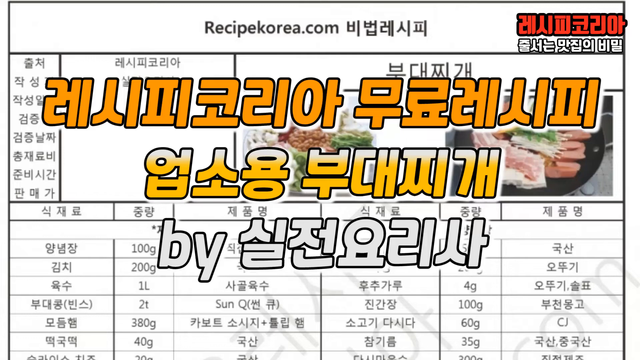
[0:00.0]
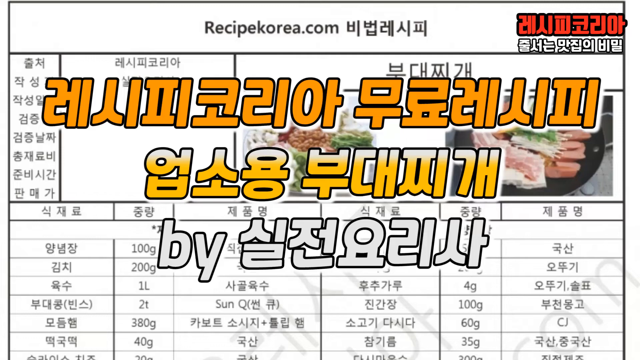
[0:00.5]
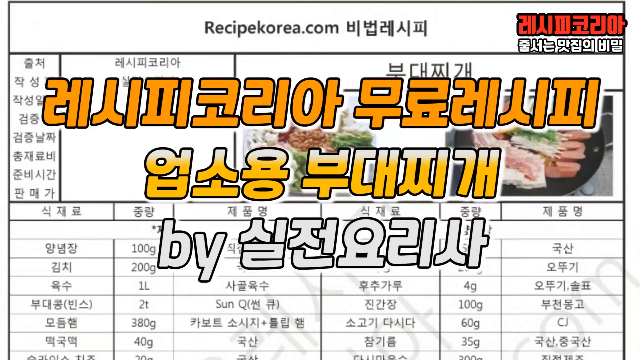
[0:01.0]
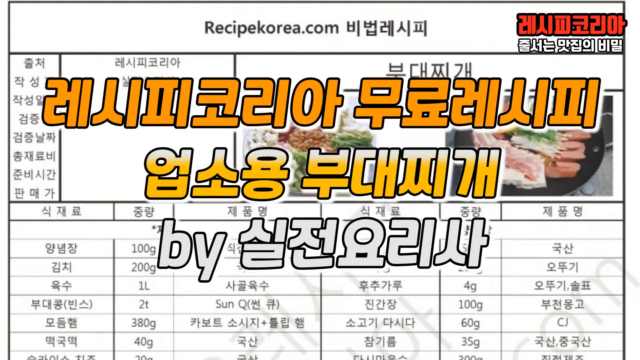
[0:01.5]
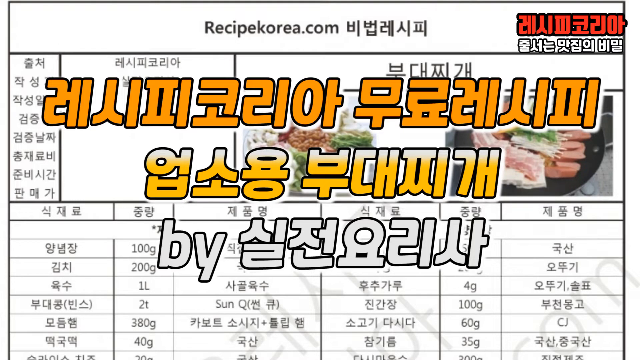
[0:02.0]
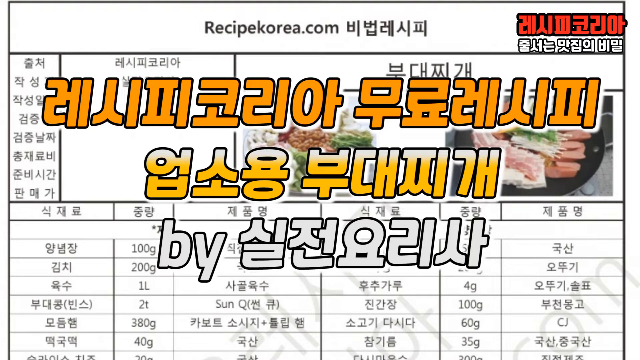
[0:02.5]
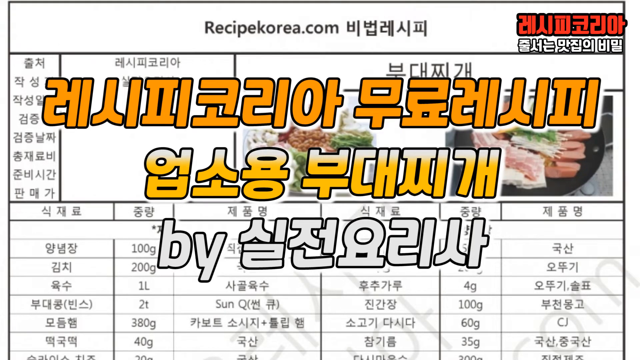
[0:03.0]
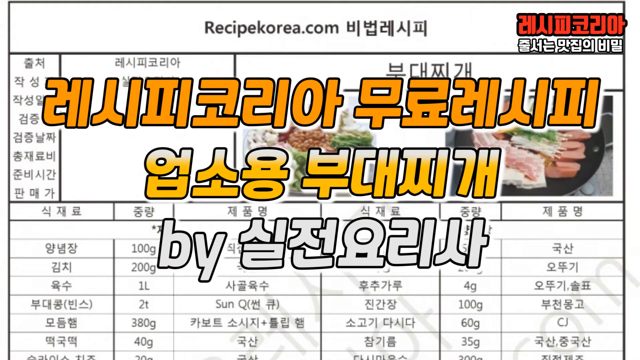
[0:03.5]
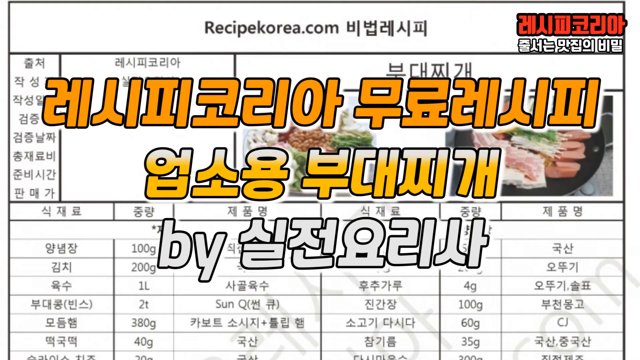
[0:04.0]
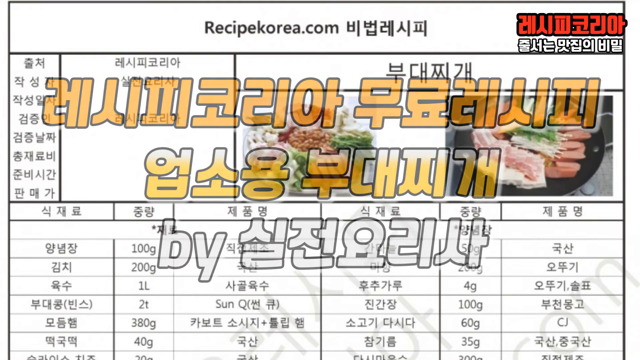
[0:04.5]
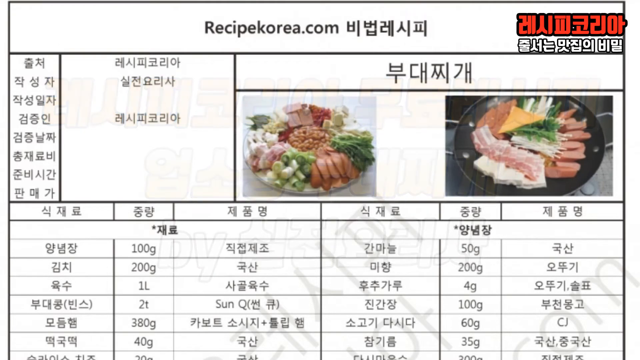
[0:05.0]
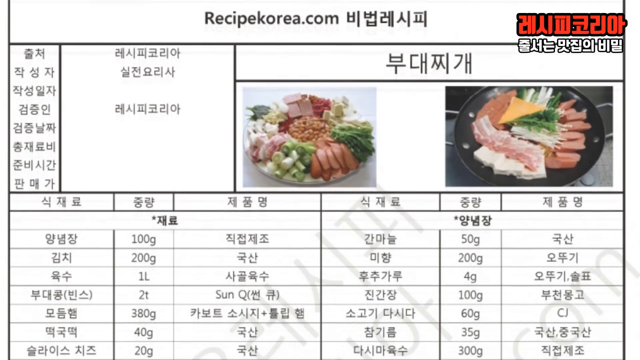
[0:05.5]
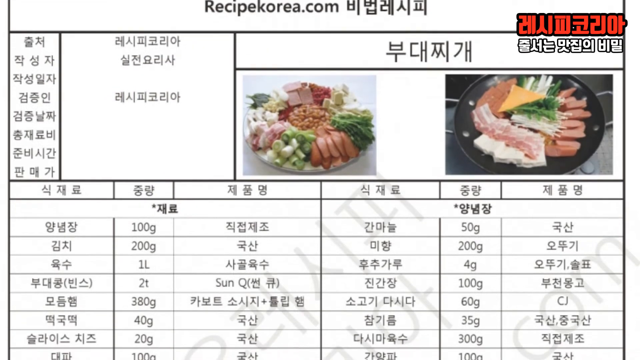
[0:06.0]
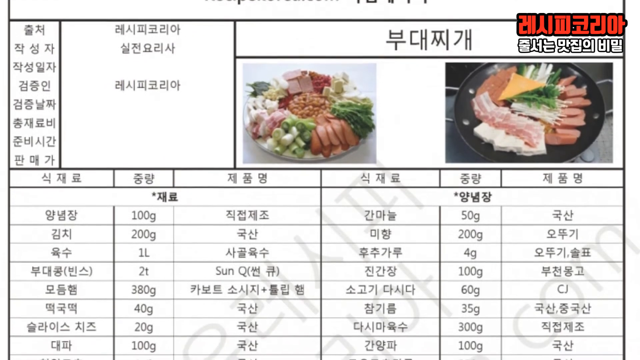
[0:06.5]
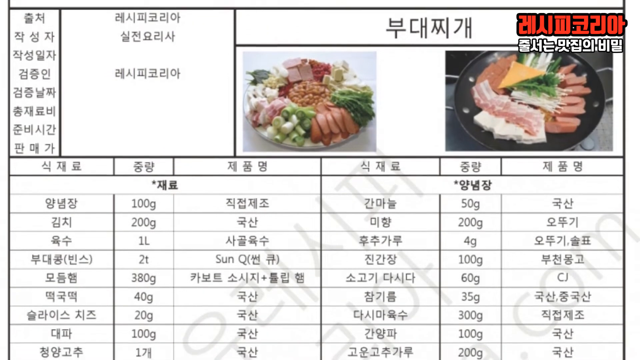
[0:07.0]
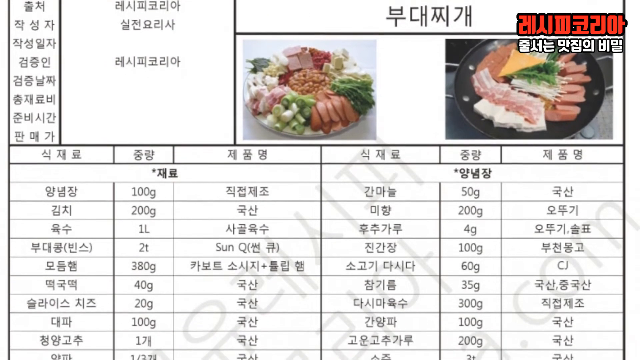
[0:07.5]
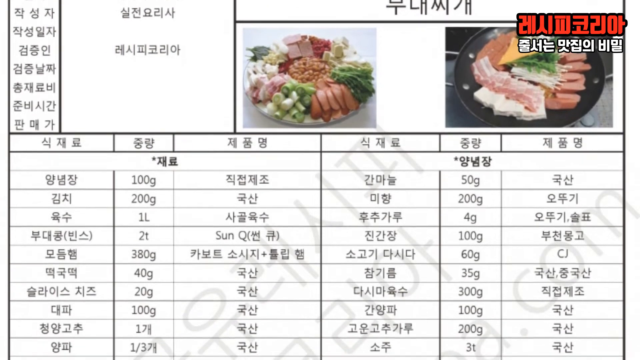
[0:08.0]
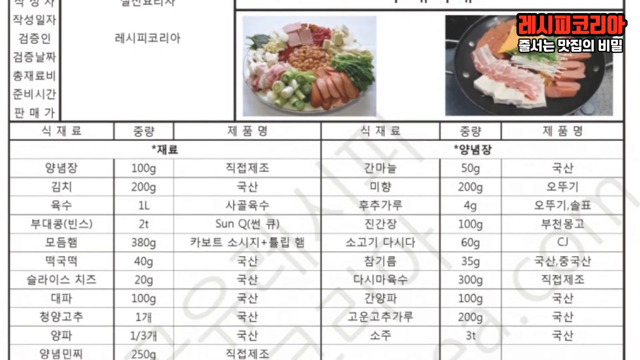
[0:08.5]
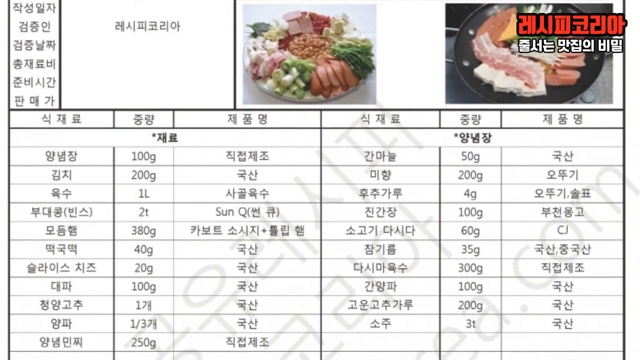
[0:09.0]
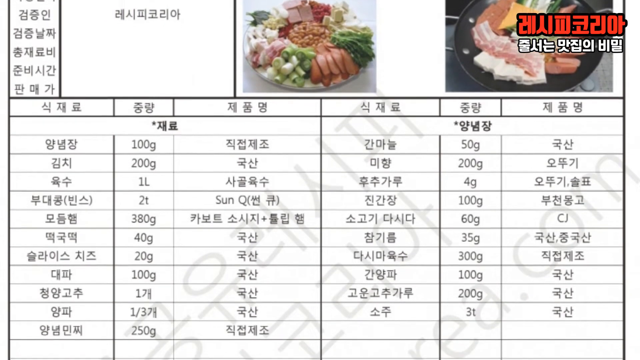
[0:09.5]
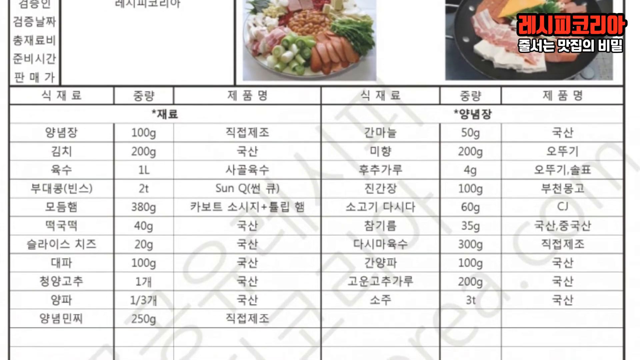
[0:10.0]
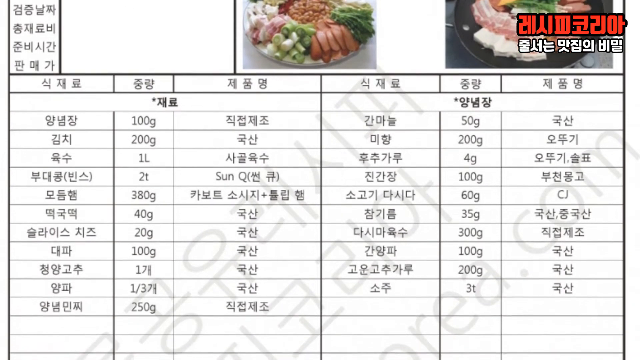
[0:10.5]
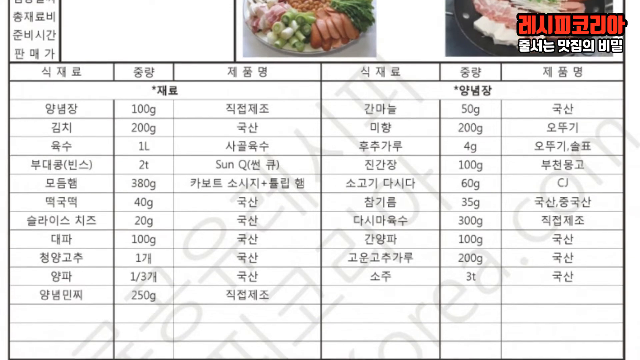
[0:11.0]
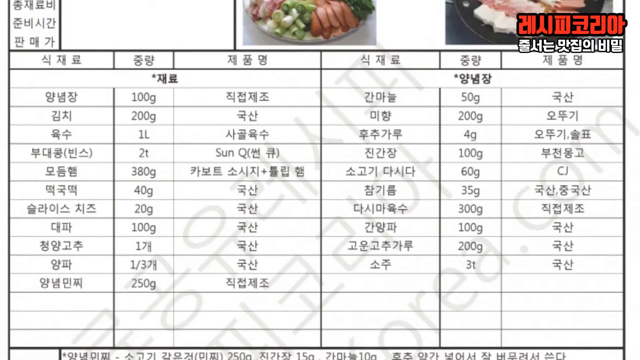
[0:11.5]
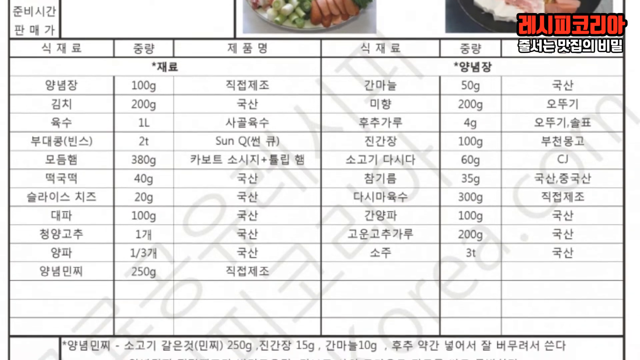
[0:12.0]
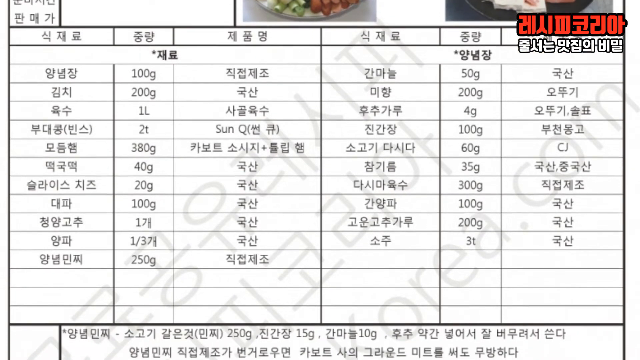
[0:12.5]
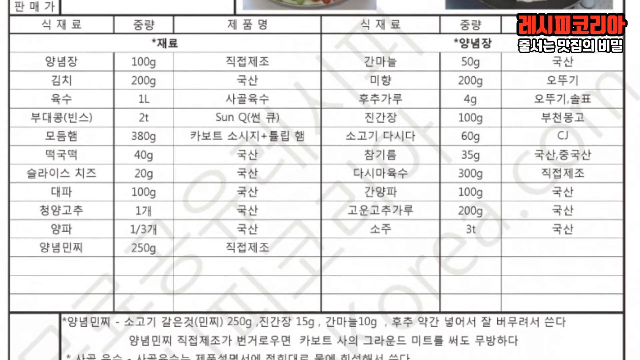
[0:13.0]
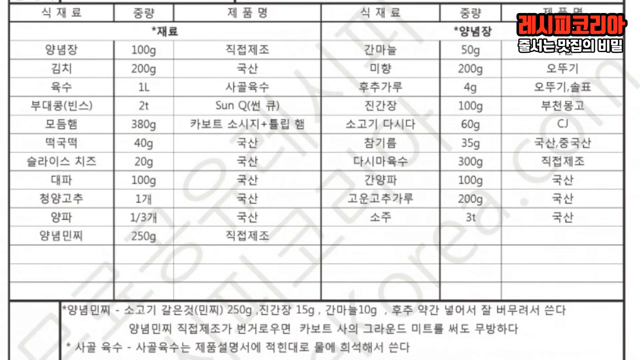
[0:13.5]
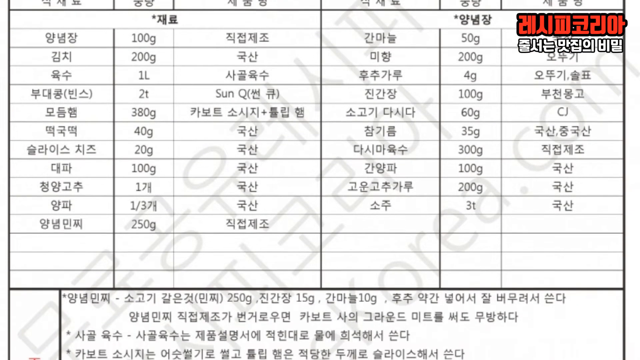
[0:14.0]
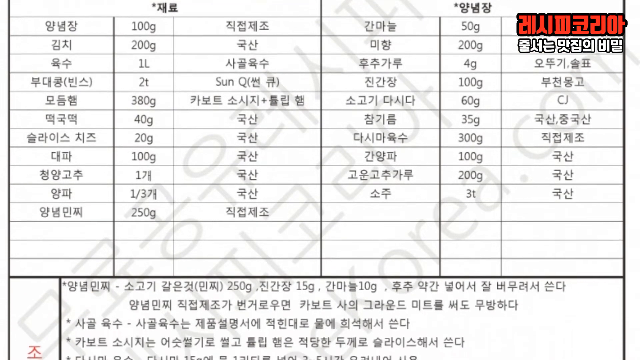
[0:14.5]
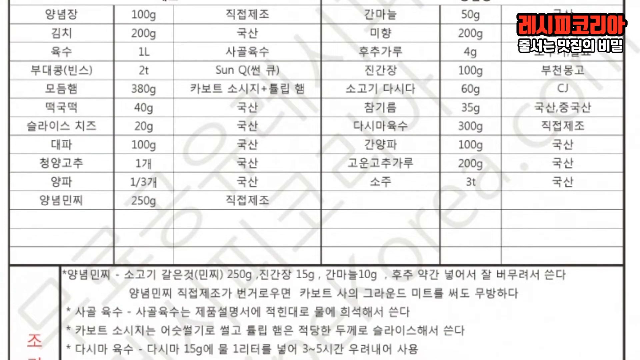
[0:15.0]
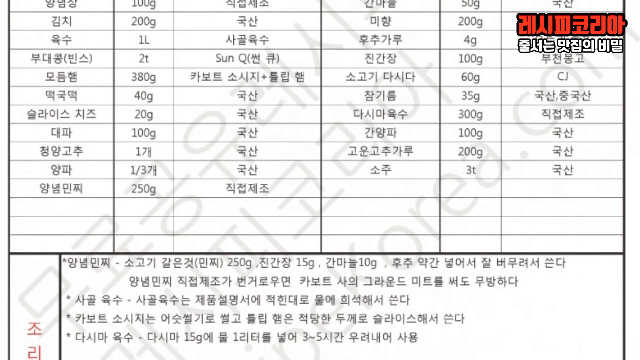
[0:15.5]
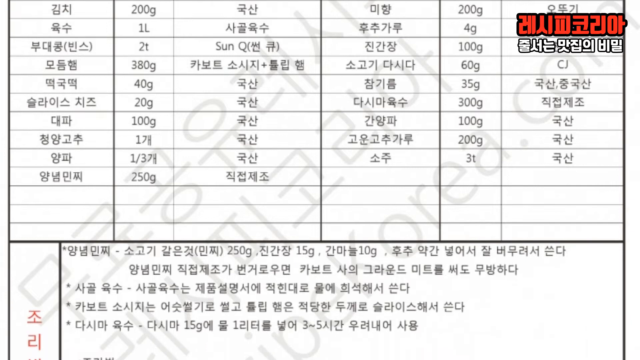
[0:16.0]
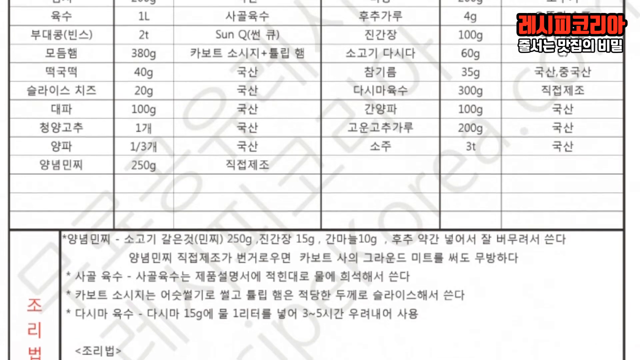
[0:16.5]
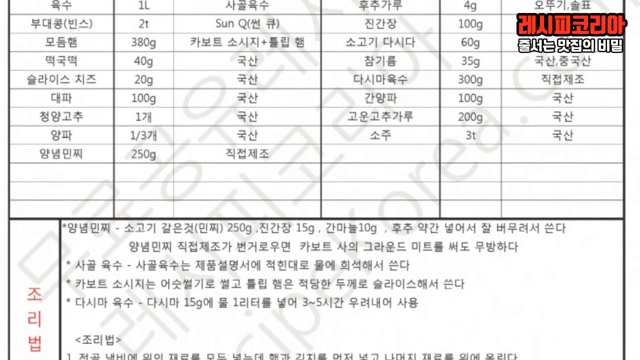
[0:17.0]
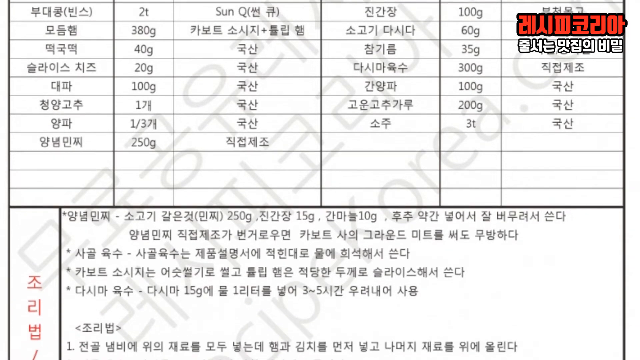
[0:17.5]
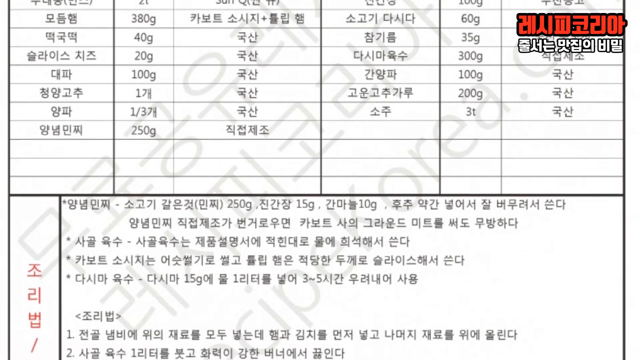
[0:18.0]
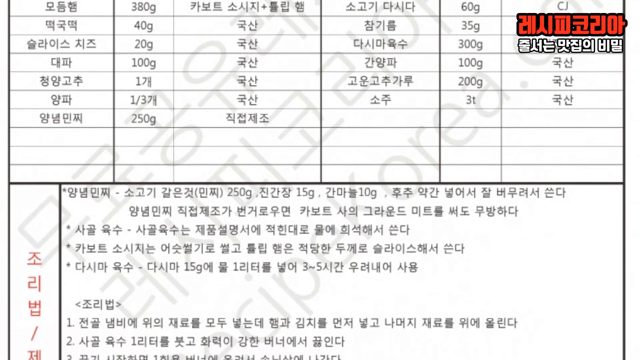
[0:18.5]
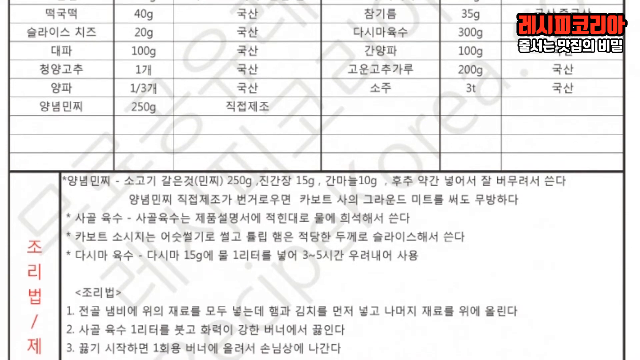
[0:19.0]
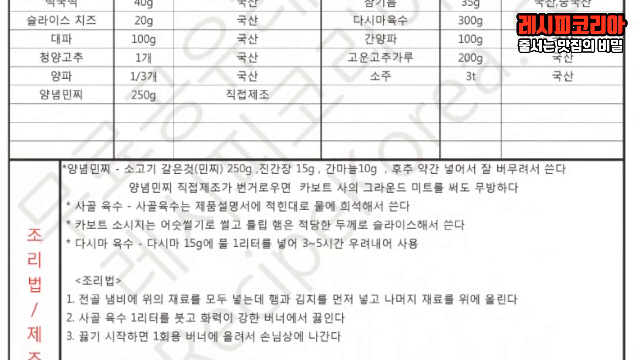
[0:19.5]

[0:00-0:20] The video's text is in Korean; at the top it reads "recipekorea.com," apparently the website the video comes from. Large titles in orange, yellow and gray appear at the beginning. The video then scrolls down a filled-out form with various columns that refer to what look like food items. The second column lists weights, some in liters and some in grams, and the penultimate column also lists weights in grams. The layout appears to be two sets of three columns, each consisting of food, and the document is possibly a price list with a different item on each row. At the top are photos of food: two platters filled with an array of foodstuffs.